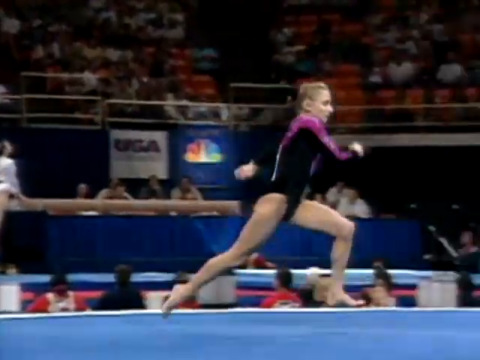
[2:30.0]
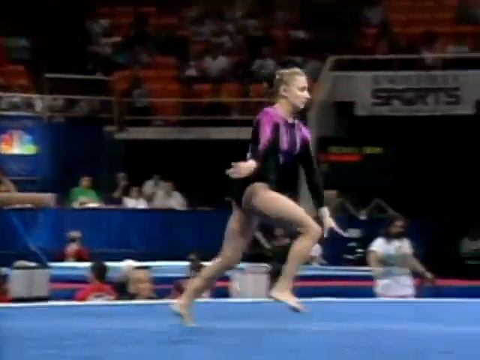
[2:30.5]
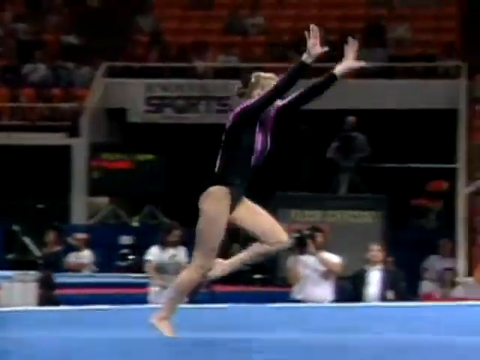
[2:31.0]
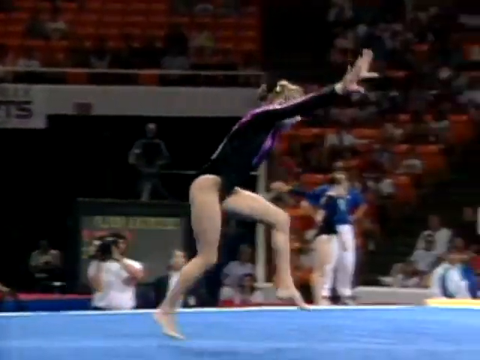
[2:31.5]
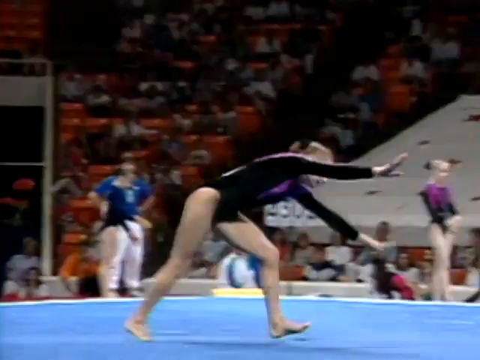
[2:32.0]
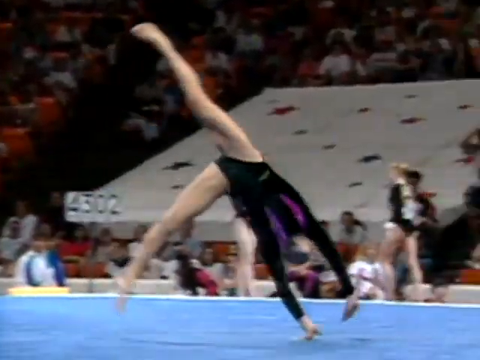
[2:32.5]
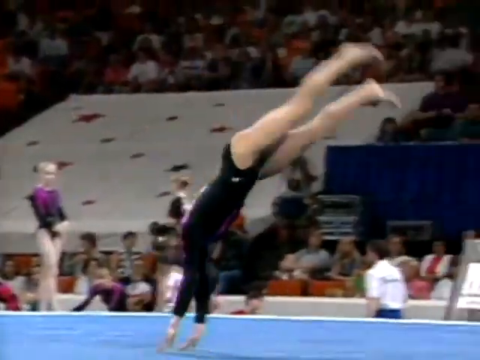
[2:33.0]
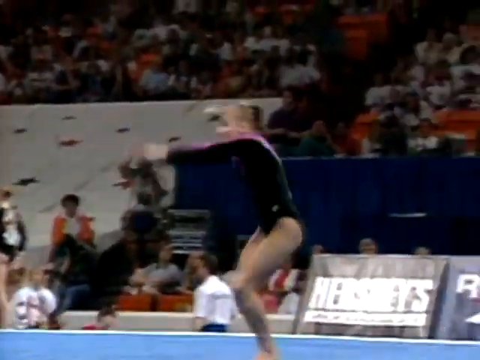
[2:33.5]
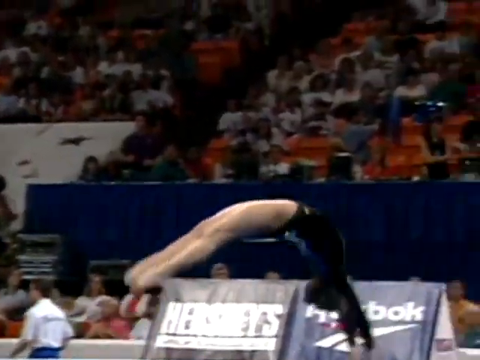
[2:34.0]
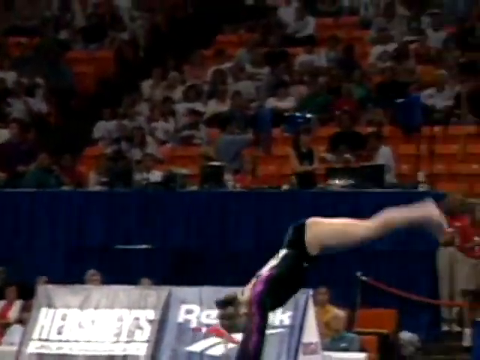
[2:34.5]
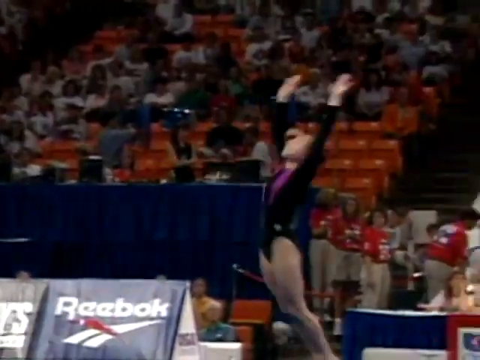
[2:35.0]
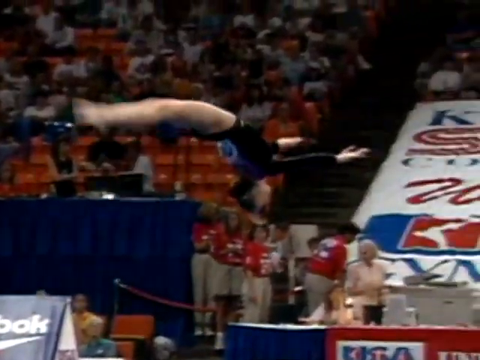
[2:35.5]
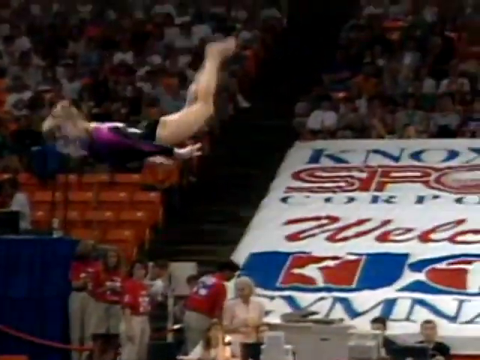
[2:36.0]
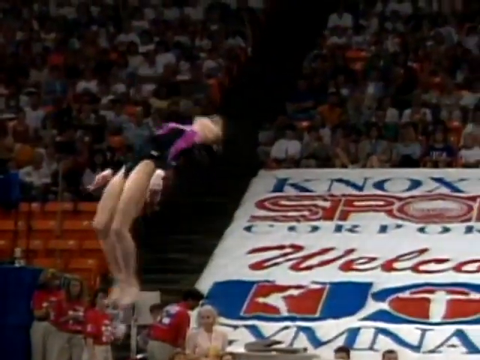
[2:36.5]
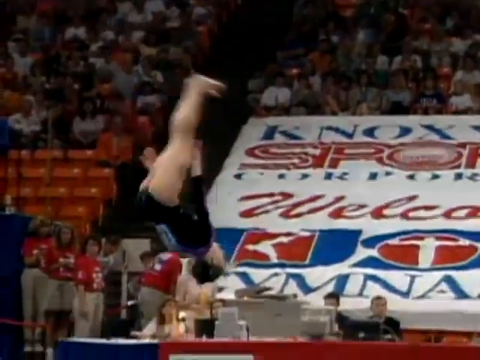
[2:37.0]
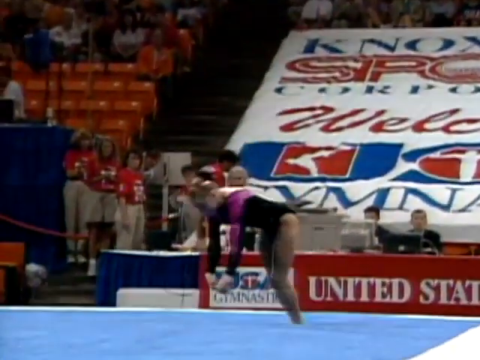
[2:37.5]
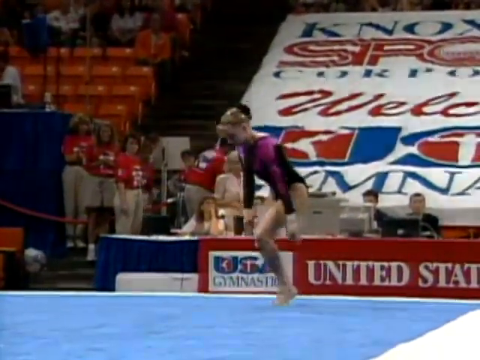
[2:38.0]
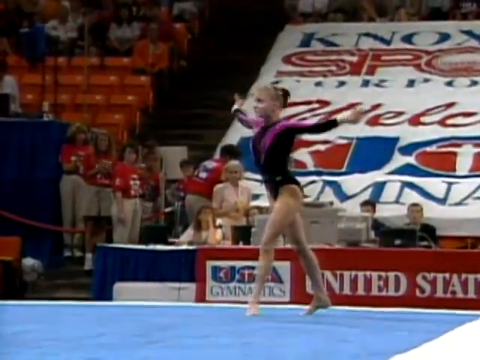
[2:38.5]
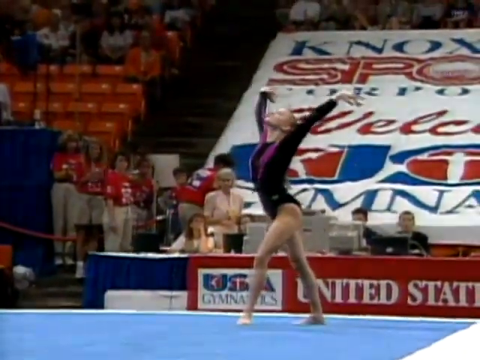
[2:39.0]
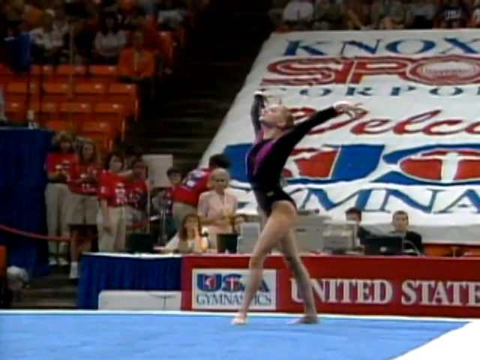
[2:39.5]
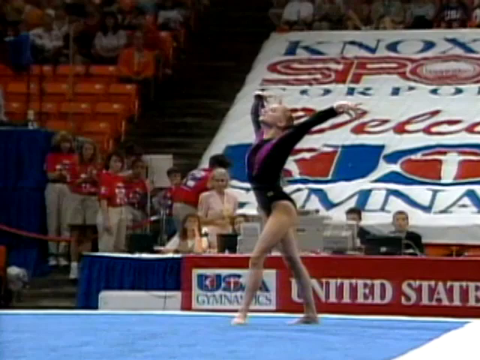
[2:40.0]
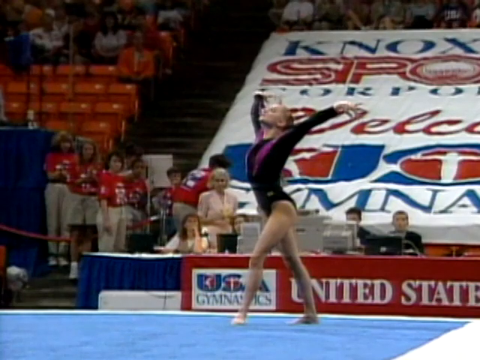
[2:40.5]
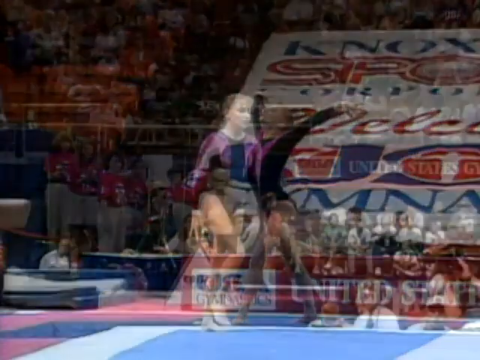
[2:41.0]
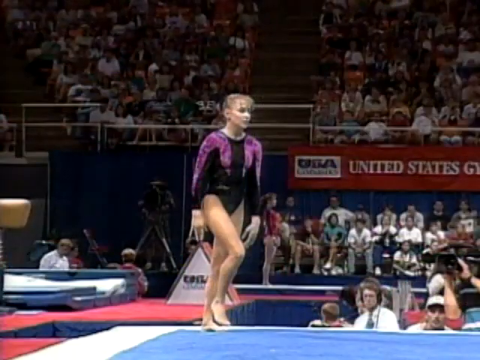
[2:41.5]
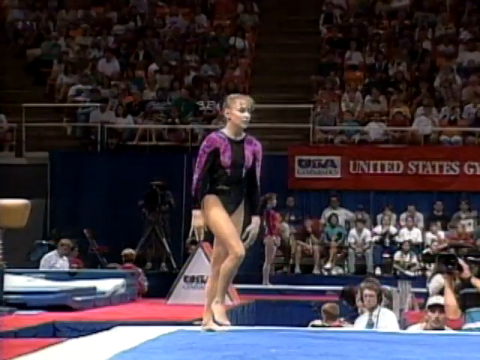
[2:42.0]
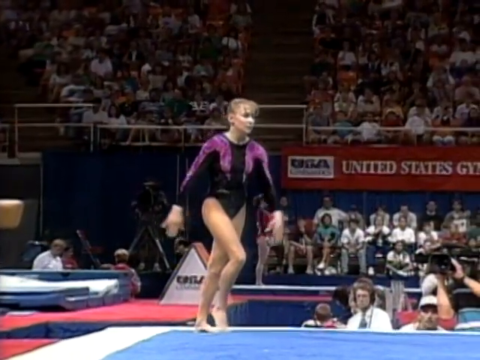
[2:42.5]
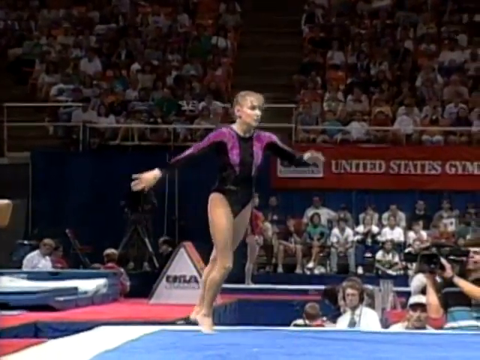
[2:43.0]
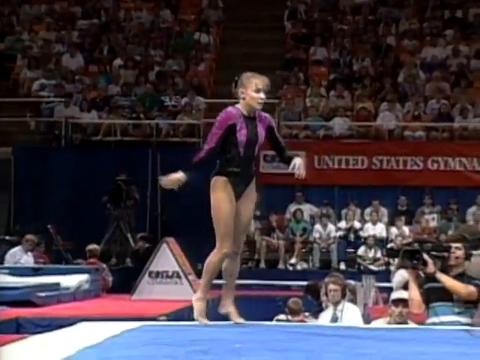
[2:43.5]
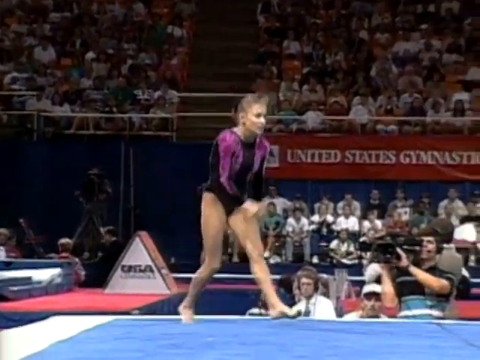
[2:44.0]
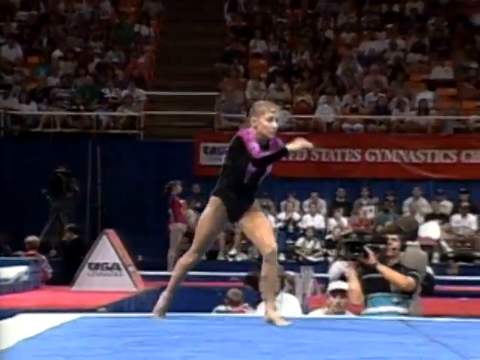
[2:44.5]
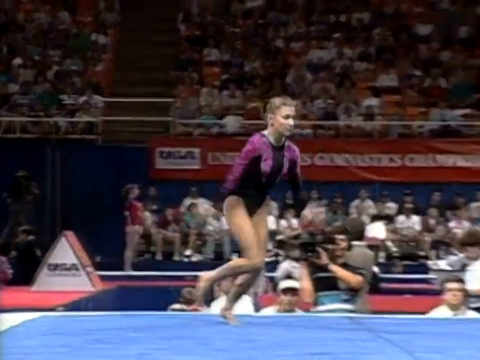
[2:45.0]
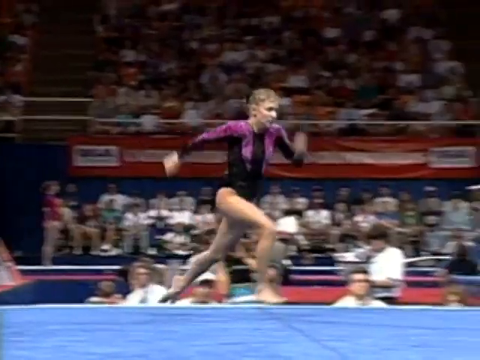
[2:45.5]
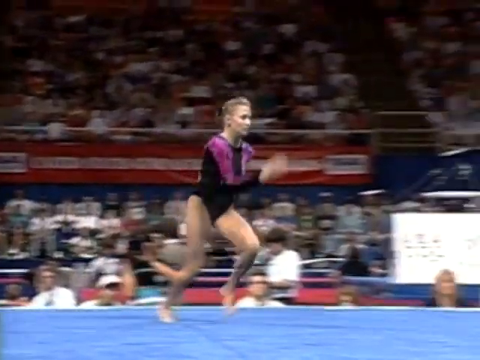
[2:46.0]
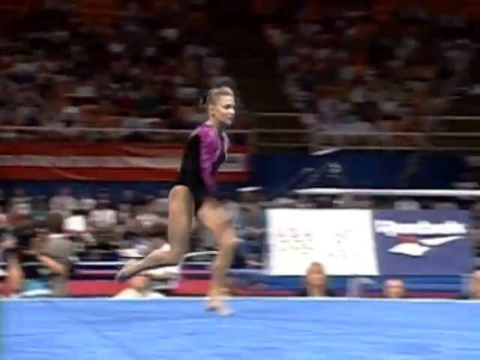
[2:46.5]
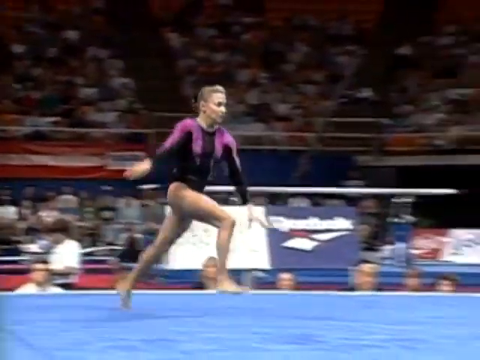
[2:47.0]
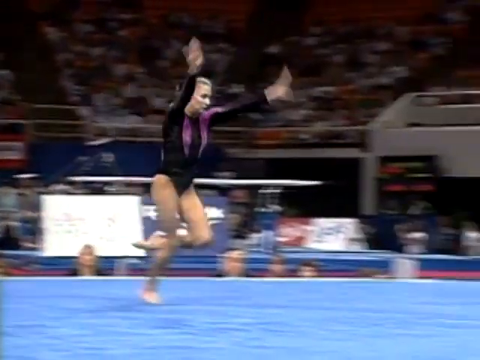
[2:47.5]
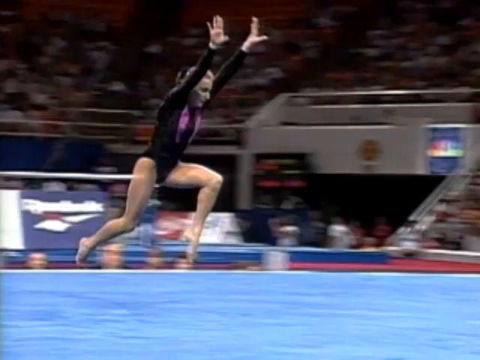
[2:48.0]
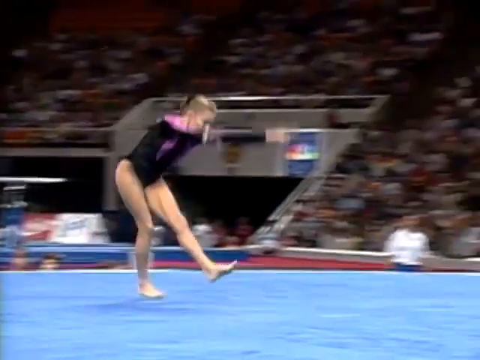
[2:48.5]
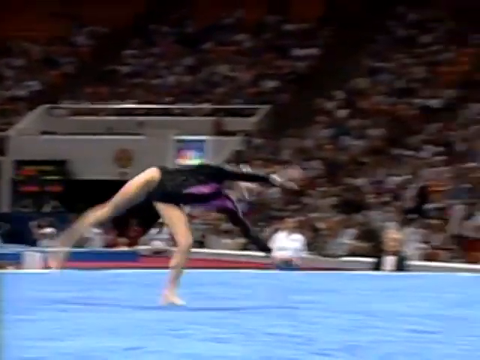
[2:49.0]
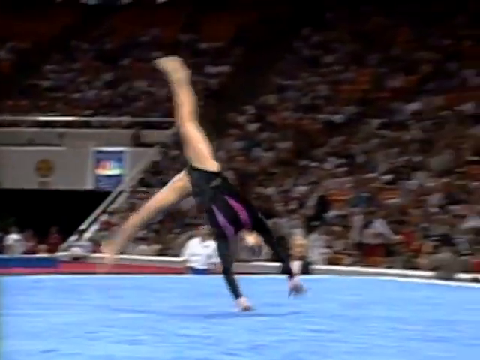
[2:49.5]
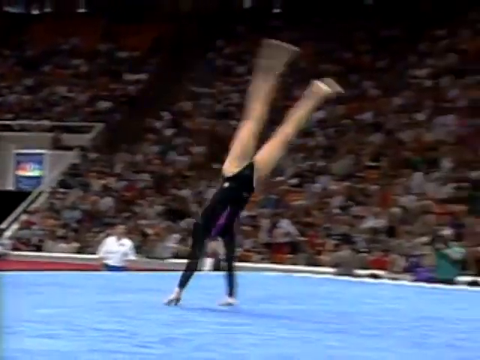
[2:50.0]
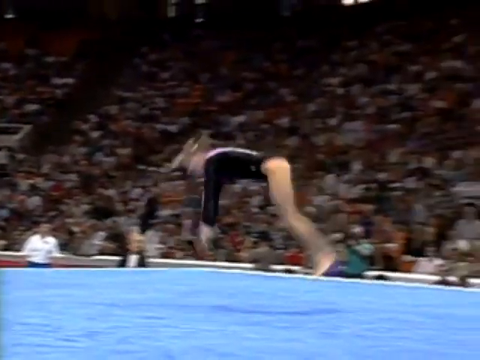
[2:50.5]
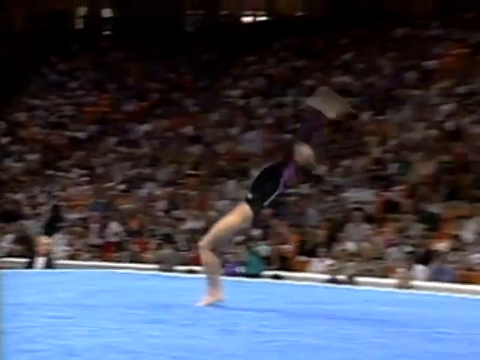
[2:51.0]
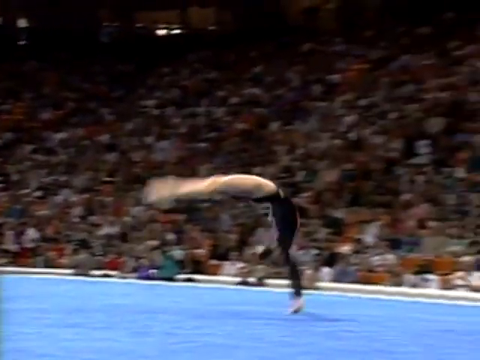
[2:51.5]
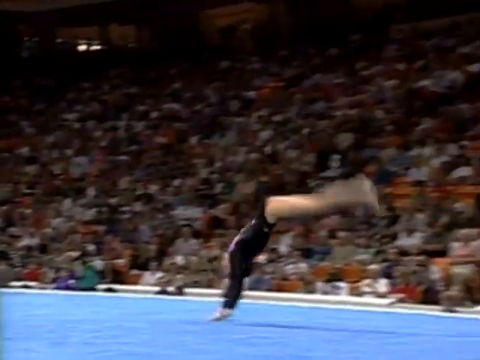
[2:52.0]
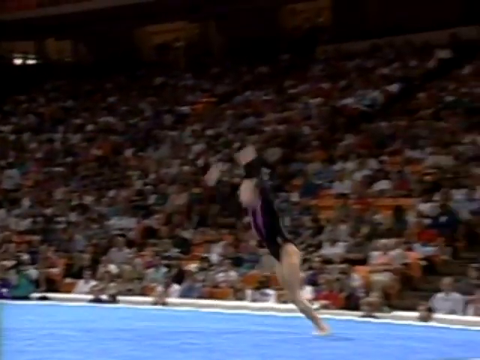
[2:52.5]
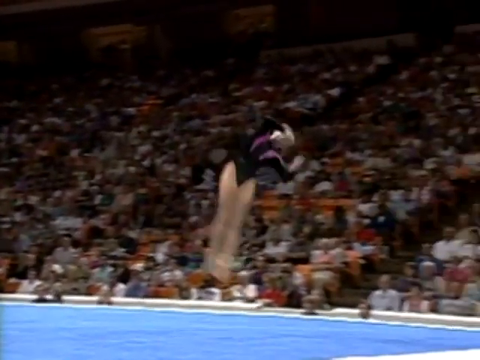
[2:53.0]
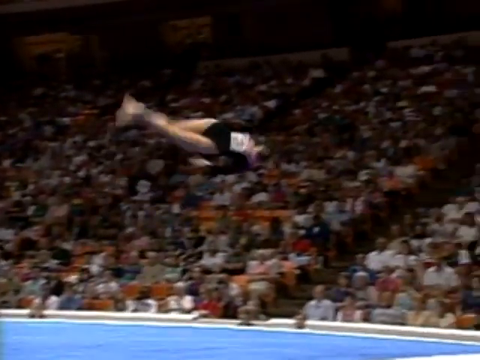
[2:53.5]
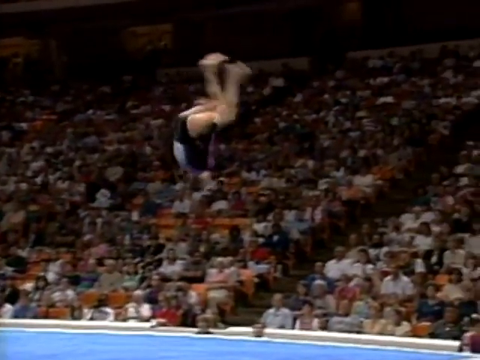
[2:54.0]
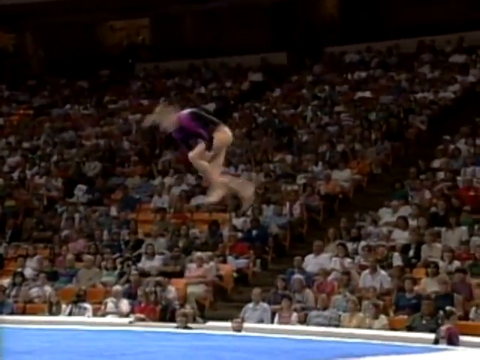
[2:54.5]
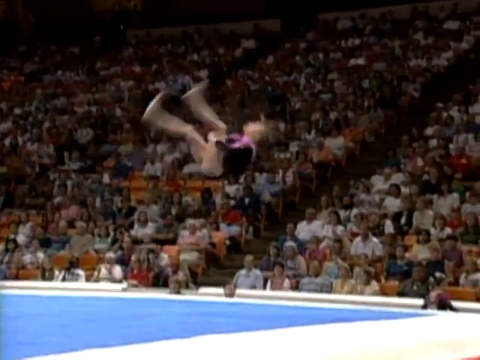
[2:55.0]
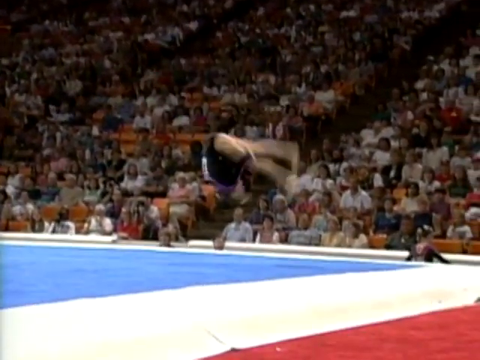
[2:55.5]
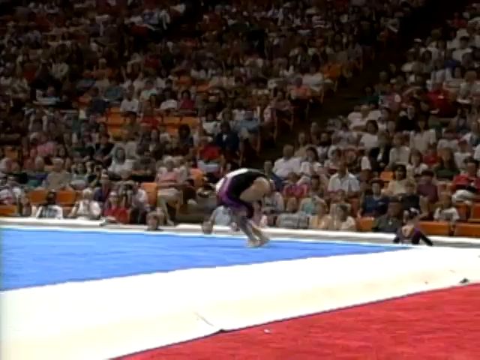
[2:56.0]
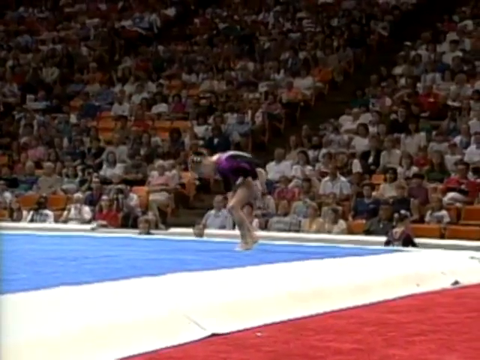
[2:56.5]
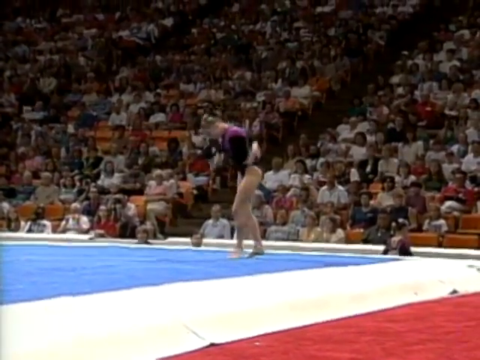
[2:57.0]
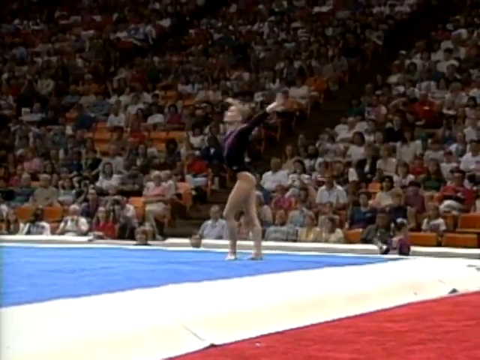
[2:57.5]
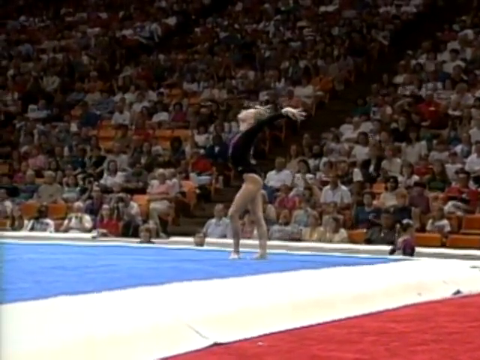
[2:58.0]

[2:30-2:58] This looks like footage from a gymnastics event in the mid to late 90s. A gymnast wears a black leotard with some purple in it. The NBC logo is in the background on one of the stands, and people in the stands are out to support the event. What looks like a replay of a trick from her performance shows her sprinting, getting ready and putting her hands up, then doing a handspring into a backward handspring into a double backflip and landing it, followed by a pose. Another replay of a different stunt shows her sprinting forward and putting her hands up, then doing a cartwheel into a back handspring and twisting into a double backflip, landing it perfectly and posing as she hits the ground.